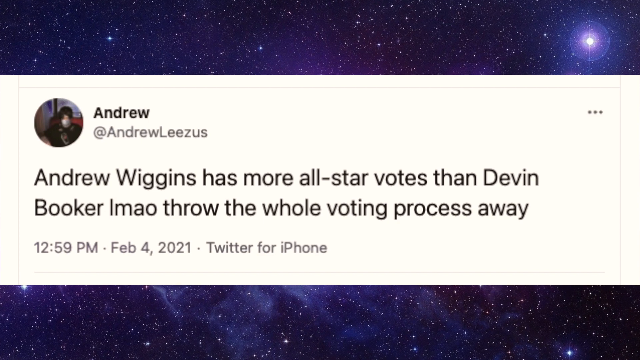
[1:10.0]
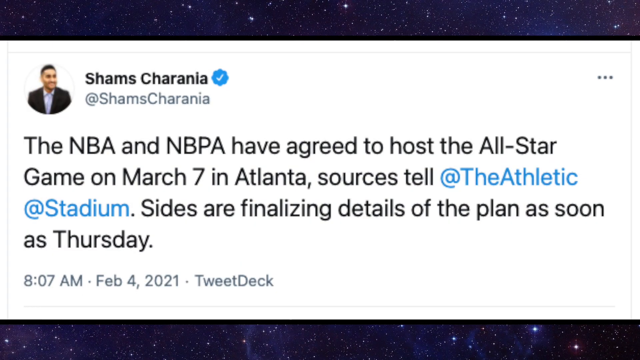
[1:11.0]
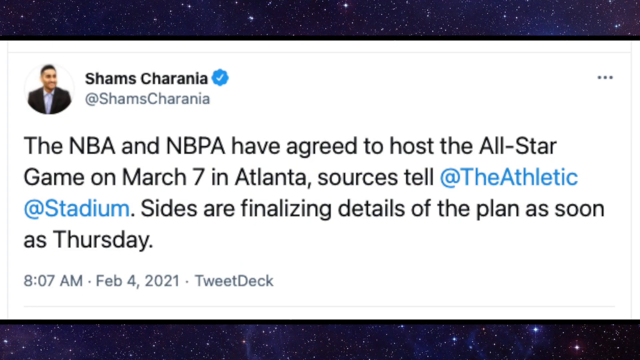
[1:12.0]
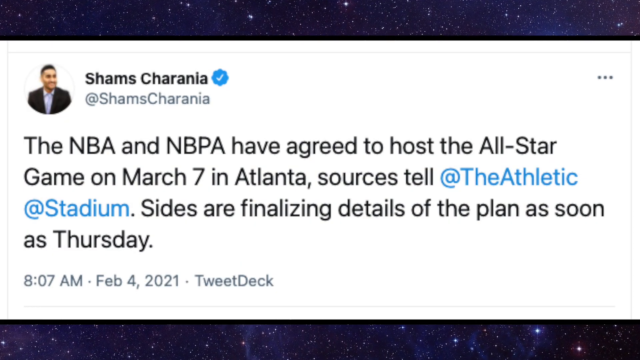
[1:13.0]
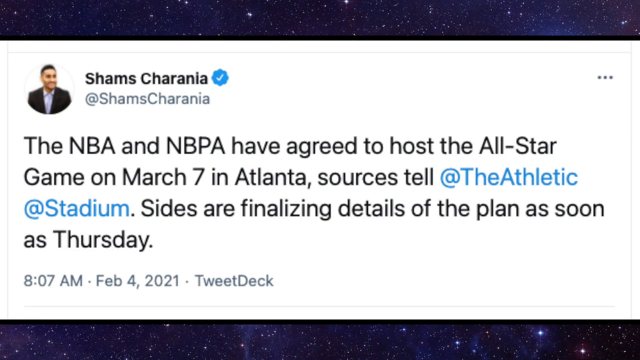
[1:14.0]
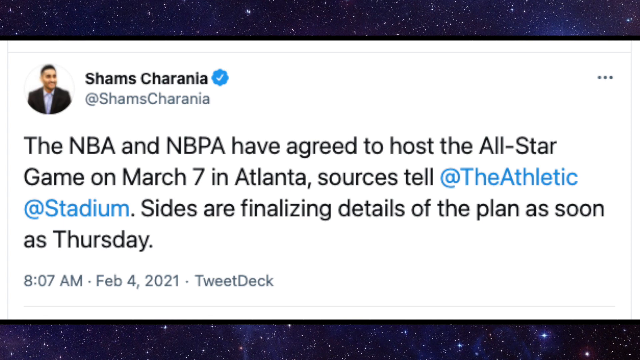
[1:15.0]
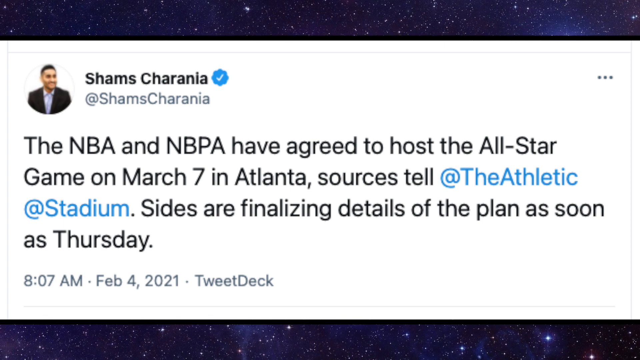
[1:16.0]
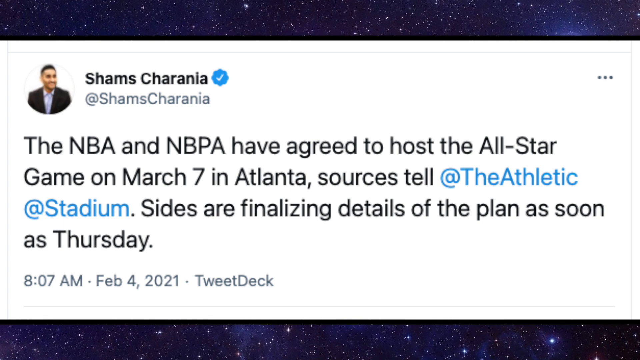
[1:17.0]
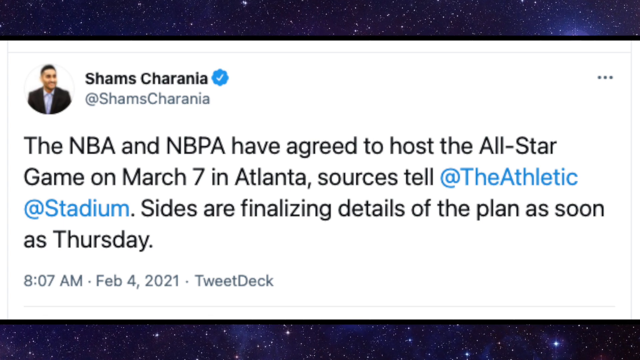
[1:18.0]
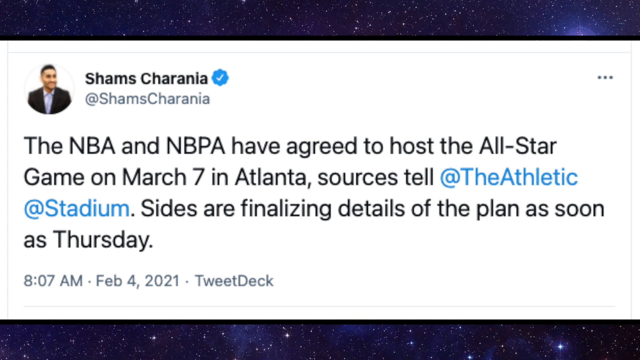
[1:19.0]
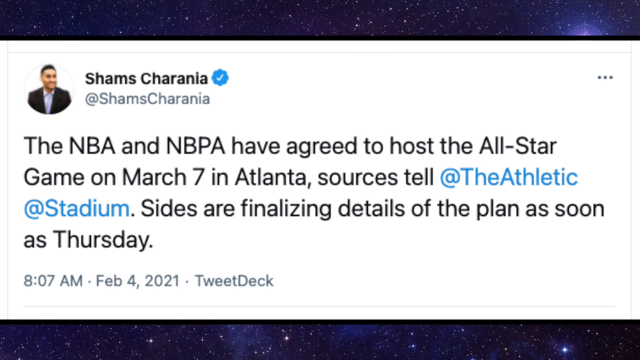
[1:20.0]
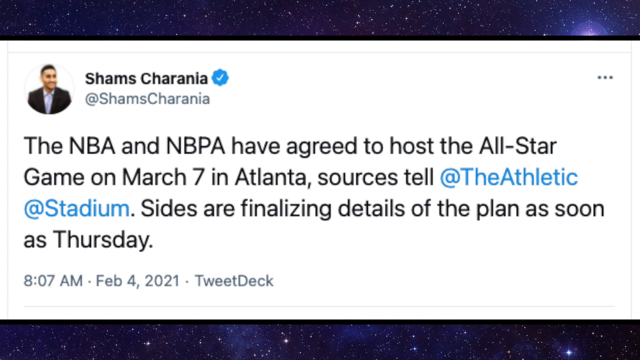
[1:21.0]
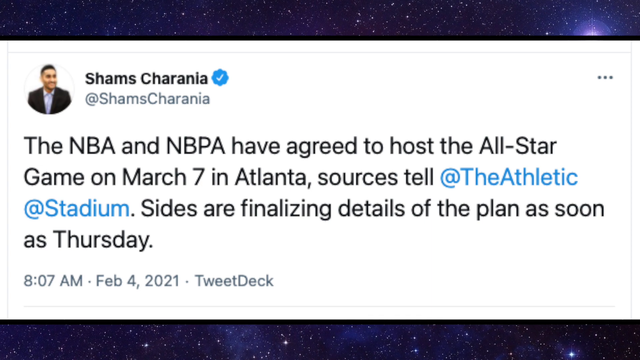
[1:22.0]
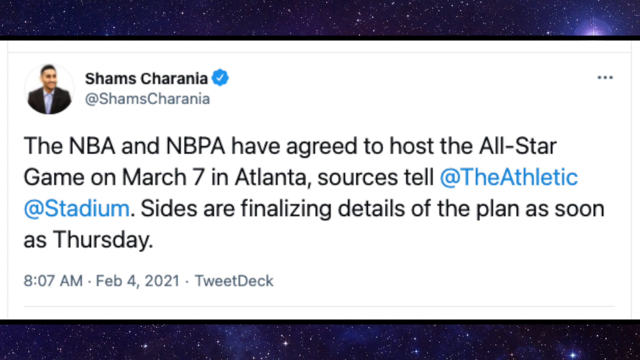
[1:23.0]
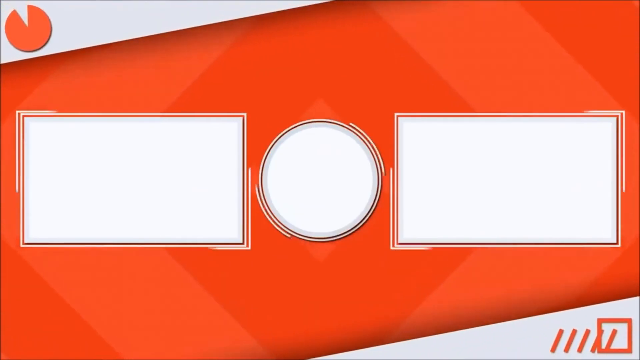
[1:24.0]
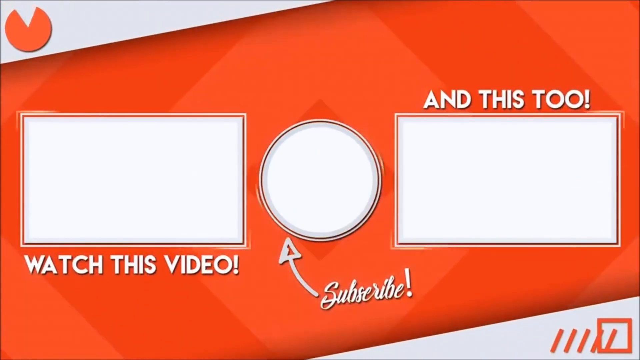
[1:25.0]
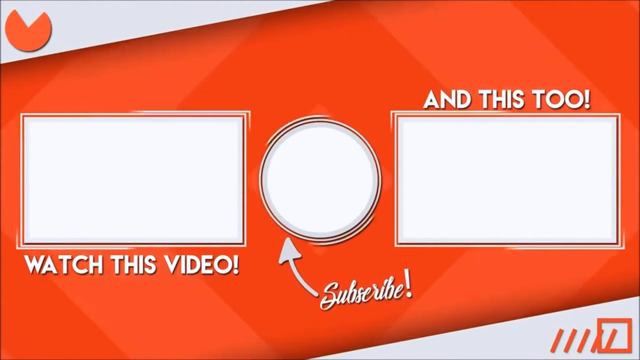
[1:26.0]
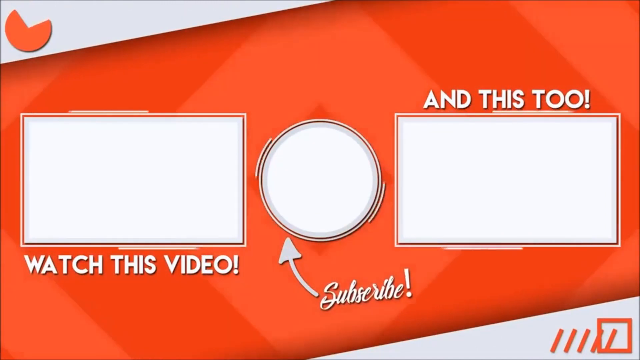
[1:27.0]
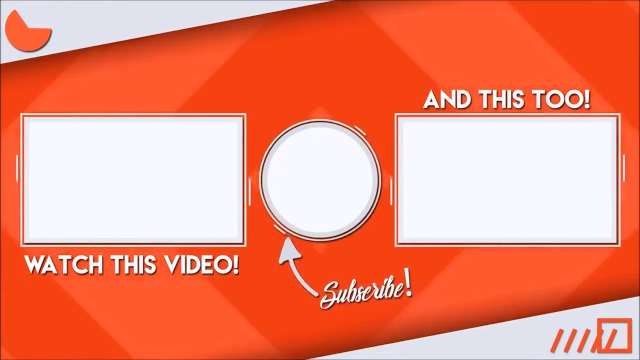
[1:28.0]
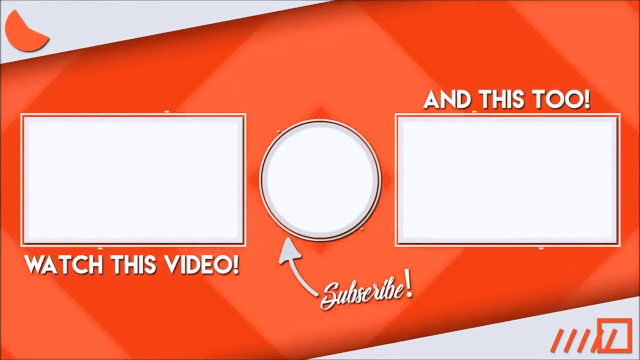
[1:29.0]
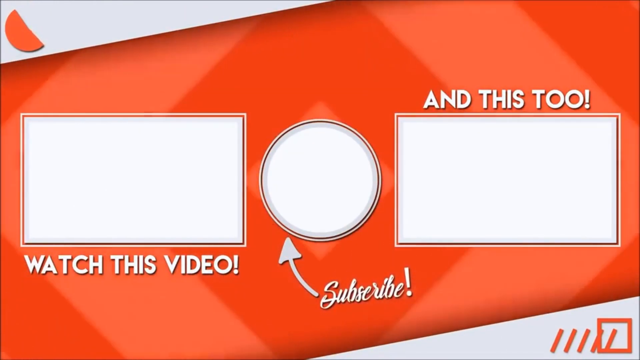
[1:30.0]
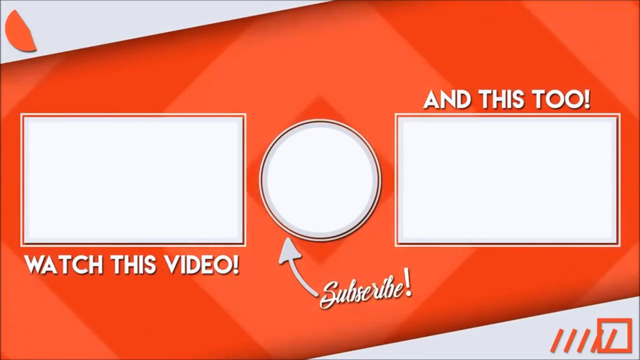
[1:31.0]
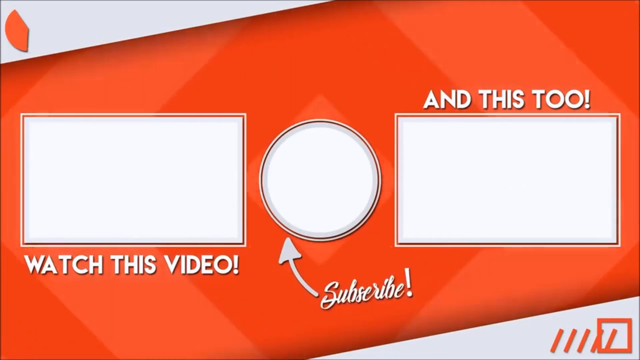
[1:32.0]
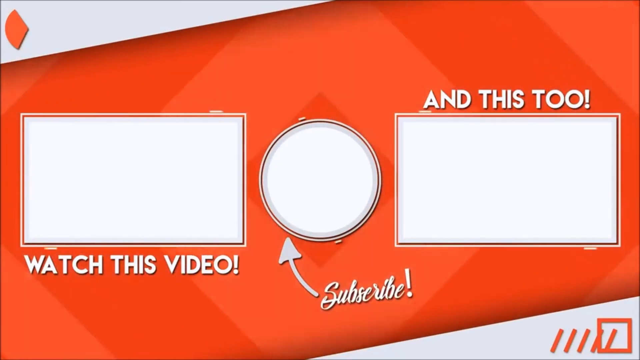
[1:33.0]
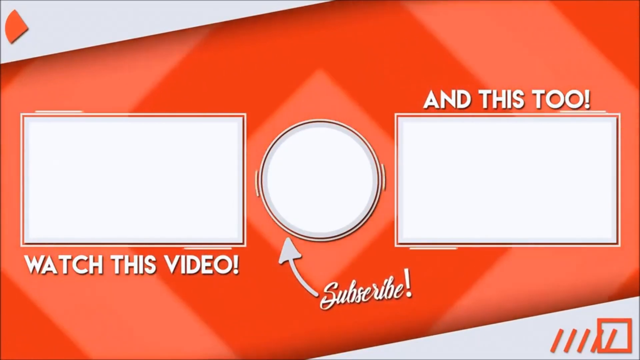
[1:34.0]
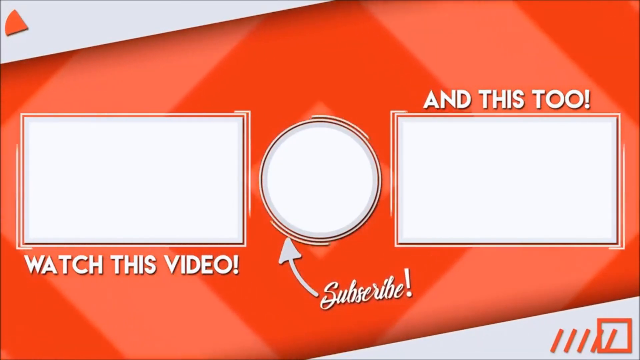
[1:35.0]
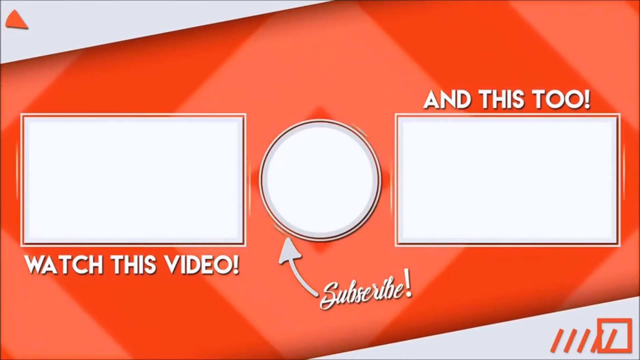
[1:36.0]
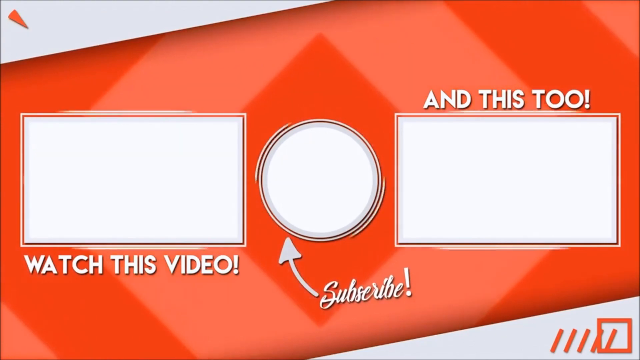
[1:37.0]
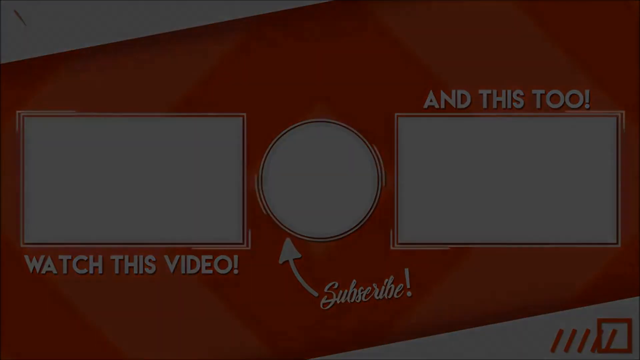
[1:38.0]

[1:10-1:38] A tweet by someone named Andrew says "Andrew Wiggins has more All-Star votes than Devin Booker." The video then transitions to another tweet from Shams Sharanya saying the NBA and the NBPA have agreed to host the All-Star game on March 7 in Atlanta, citing his sources, and that the sides are finalizing the details of the plan as soon as next Thursday; it was tweeted at 8:07 a.m. on February 4th, 2021. Finally, the video transitions to a sort of YouTube-like page with white shapes: two white rectangles on each side and a white circle in the middle. Text below the first white rectangle says "watch this video," and the circle in the middle has an arrow asking people to subscribe. It seems thumbnails of videos and channels will appear there. The background is orange, with squares in two shades of orange coming out of it and growing, giving an idea of depth. In the top left corner a countdown timer runs out, and when it reaches zero the video fades out and ends.